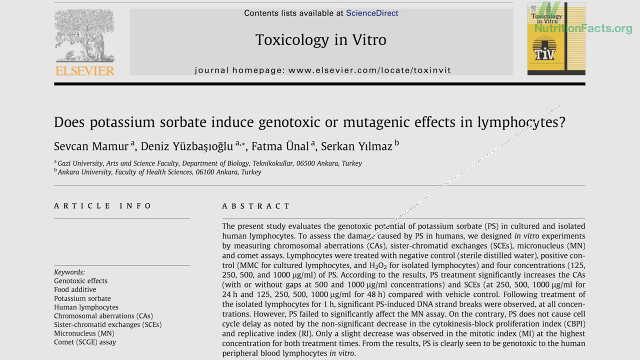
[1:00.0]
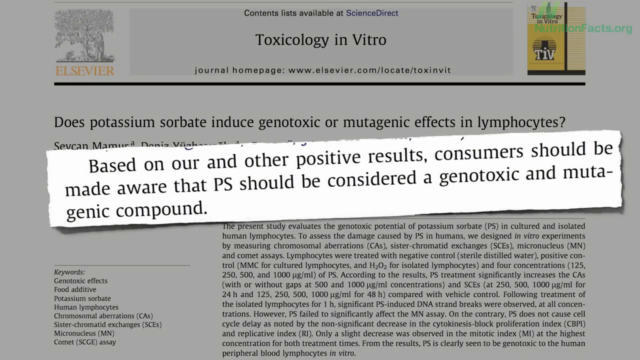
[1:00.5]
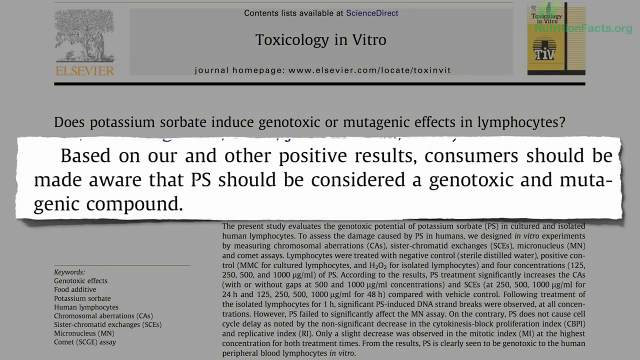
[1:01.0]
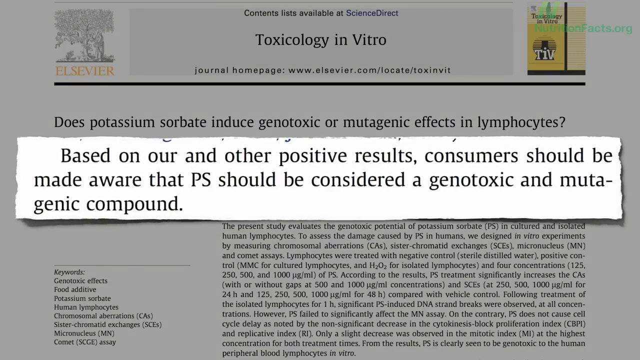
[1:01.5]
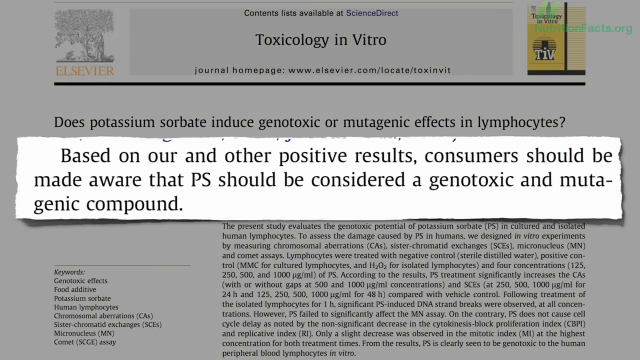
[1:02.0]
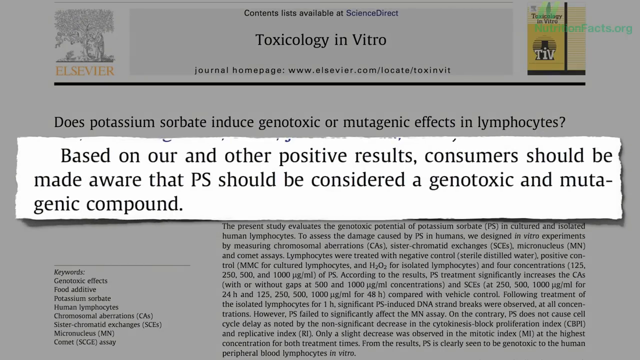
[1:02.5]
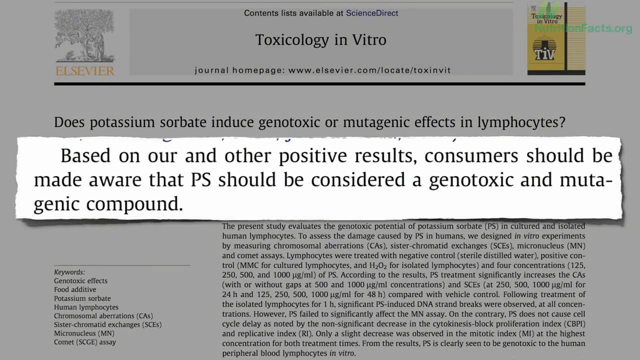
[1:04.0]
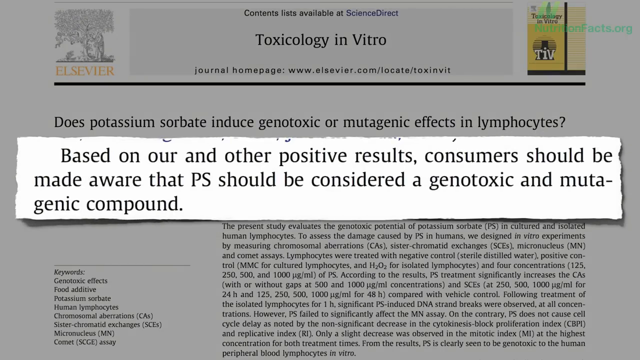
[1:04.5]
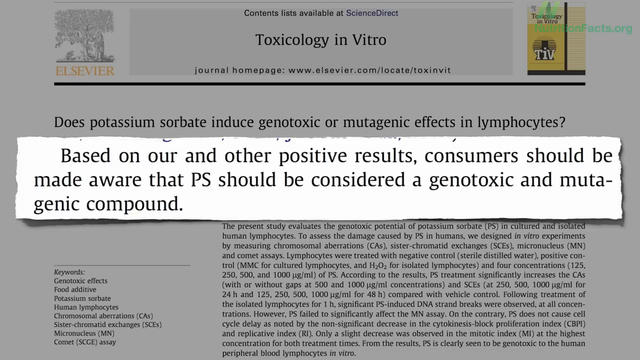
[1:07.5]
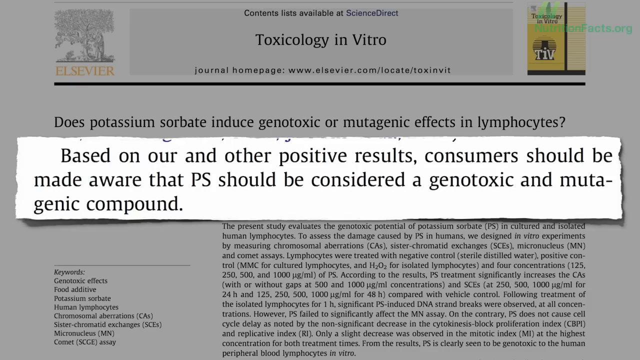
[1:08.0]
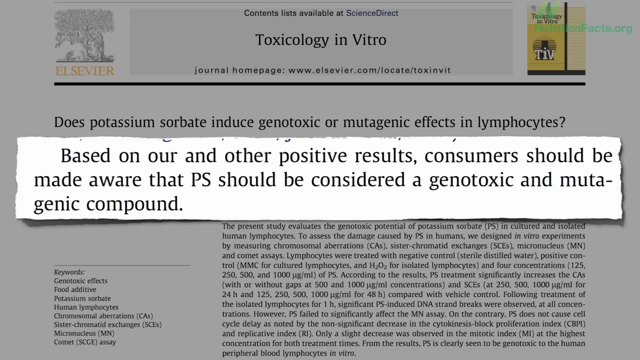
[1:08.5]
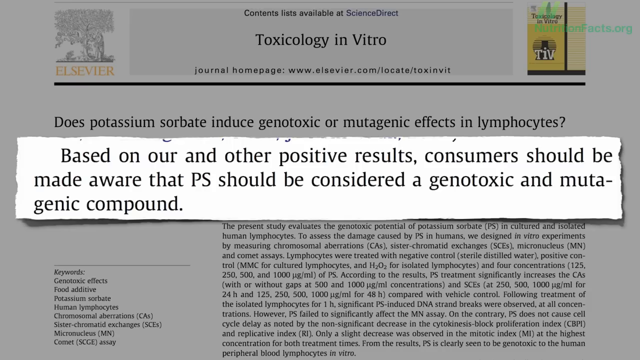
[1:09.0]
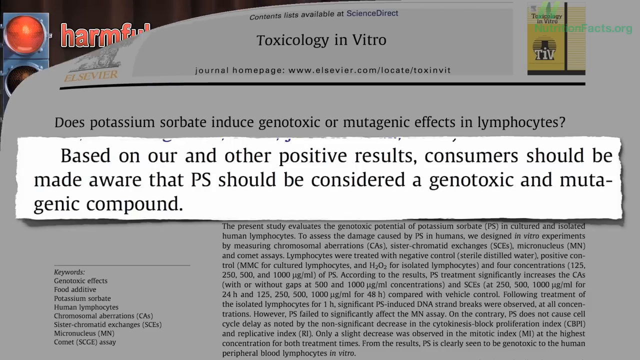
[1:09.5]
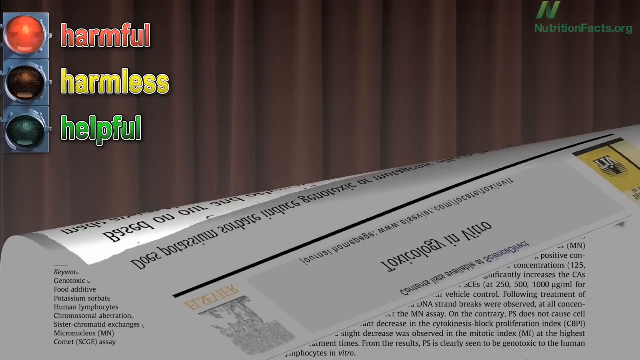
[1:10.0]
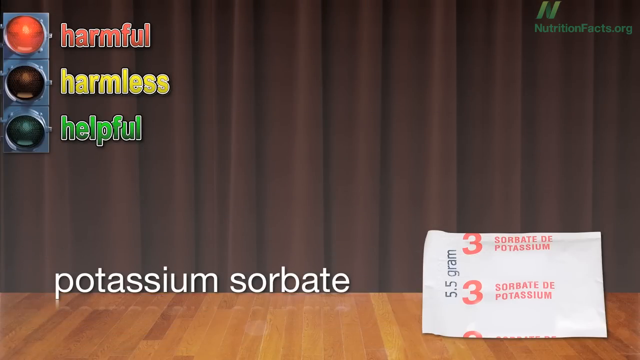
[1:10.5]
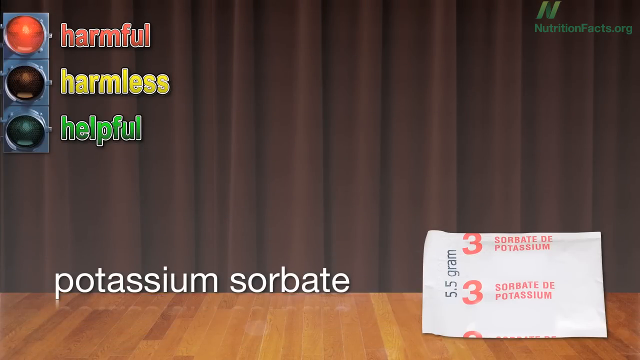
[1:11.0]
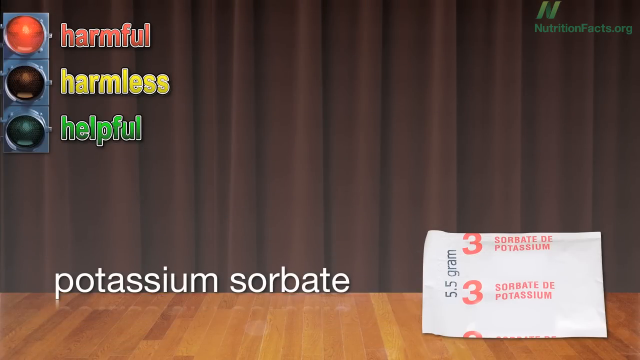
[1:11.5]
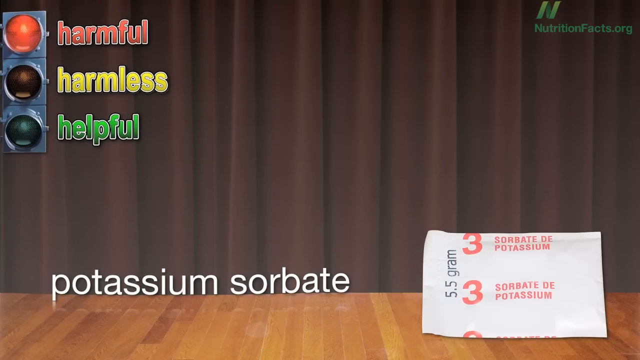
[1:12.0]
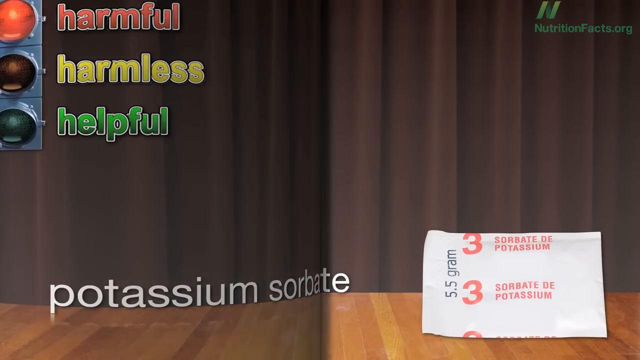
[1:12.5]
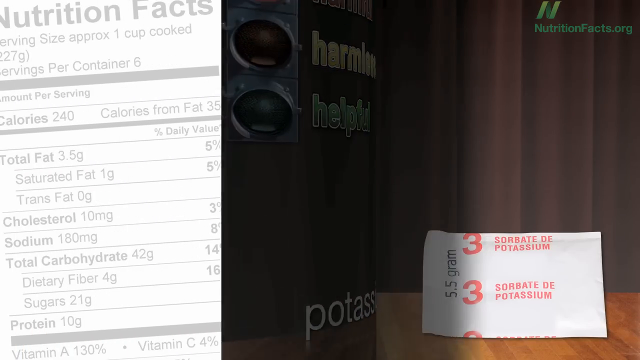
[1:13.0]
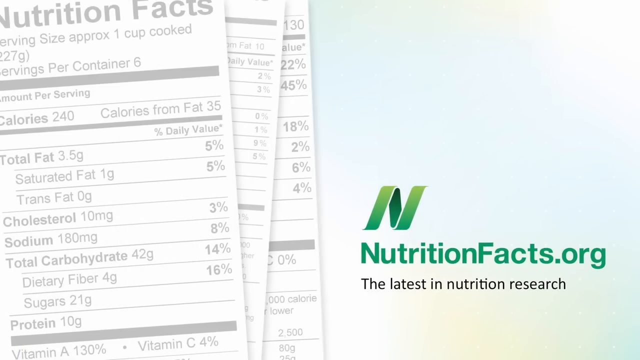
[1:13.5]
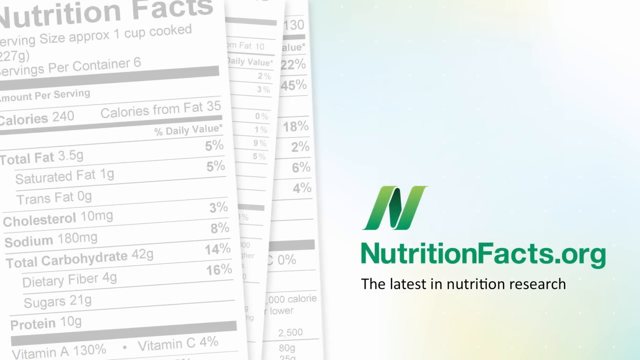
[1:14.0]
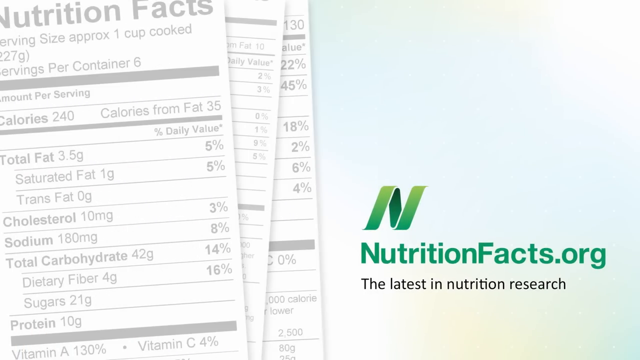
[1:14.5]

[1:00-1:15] Text appears on the screen in bold letters: "based on our and other positive results consumers should be made aware that PS should be considered a genotoxic and mutagenic compound", with PS meaning potassium sorbate and bold capitals above the text. The screen then changes back to the scroll on potassium sorbate and finally to the very first page, with nutritionfacts.org and "the latest in nutrition research".